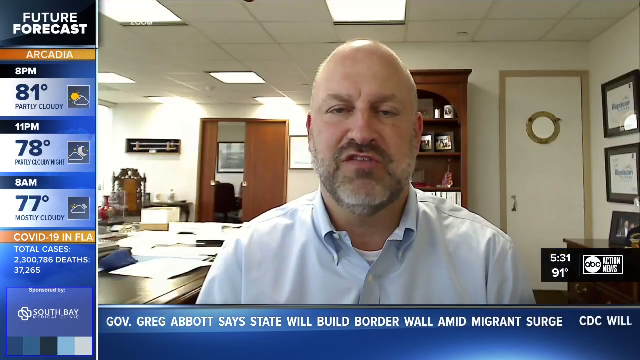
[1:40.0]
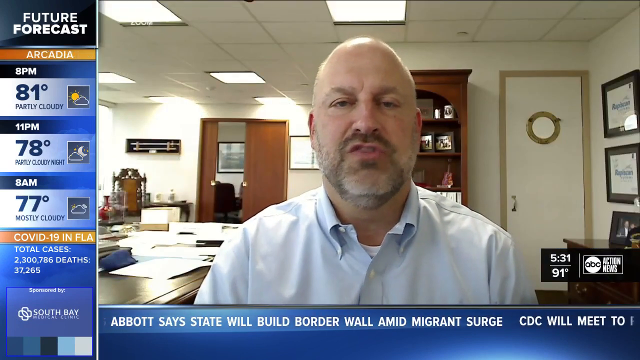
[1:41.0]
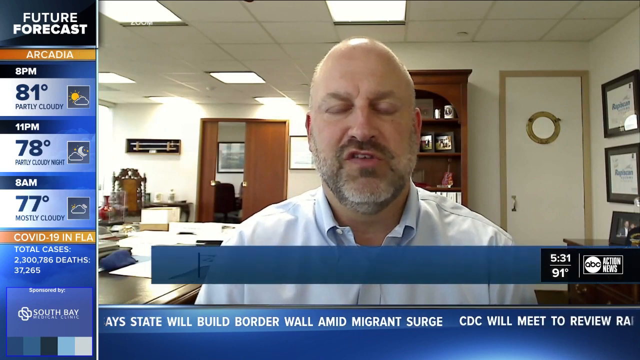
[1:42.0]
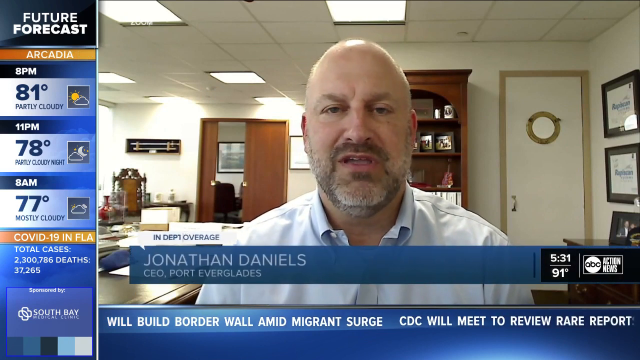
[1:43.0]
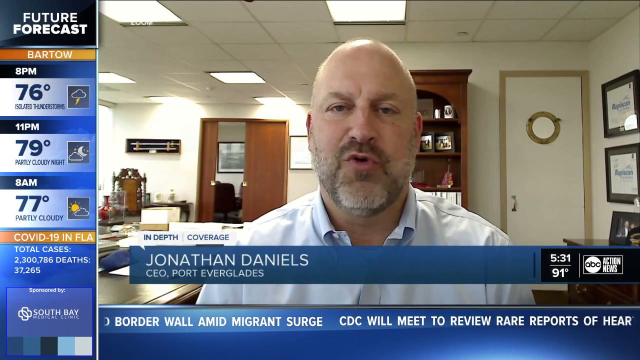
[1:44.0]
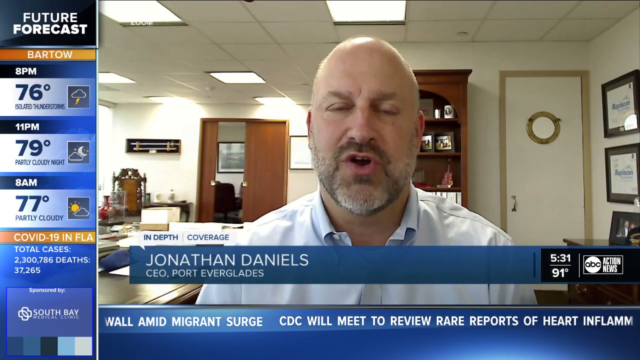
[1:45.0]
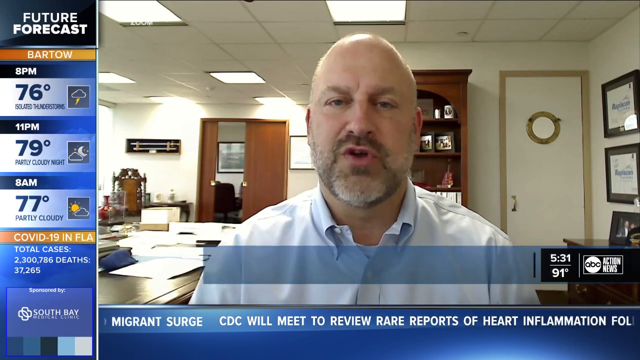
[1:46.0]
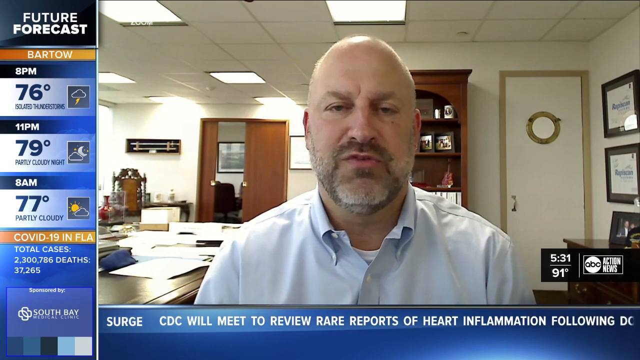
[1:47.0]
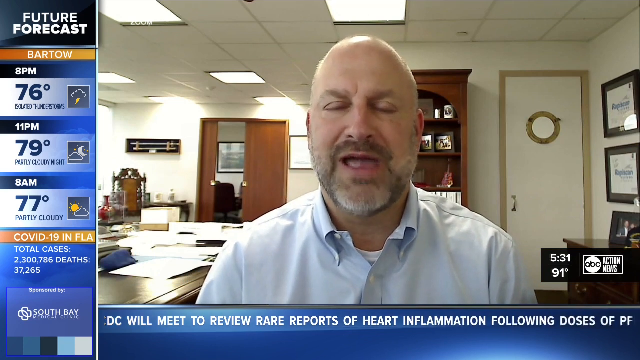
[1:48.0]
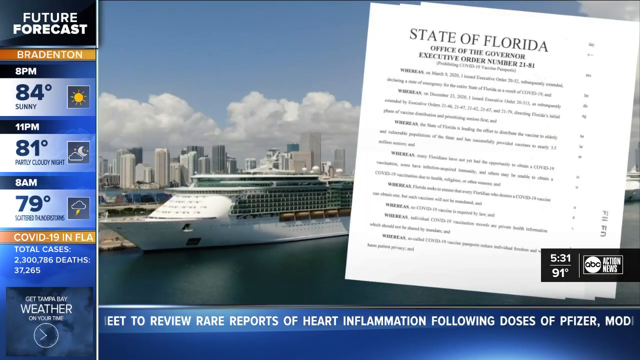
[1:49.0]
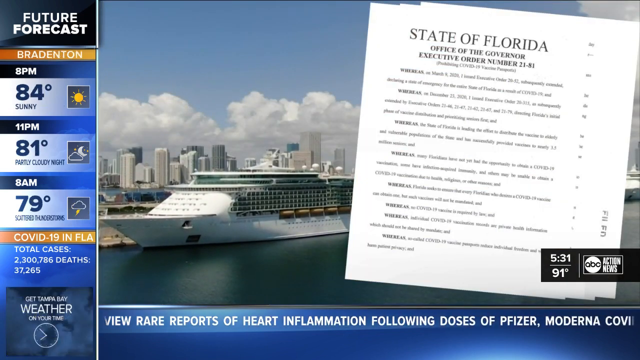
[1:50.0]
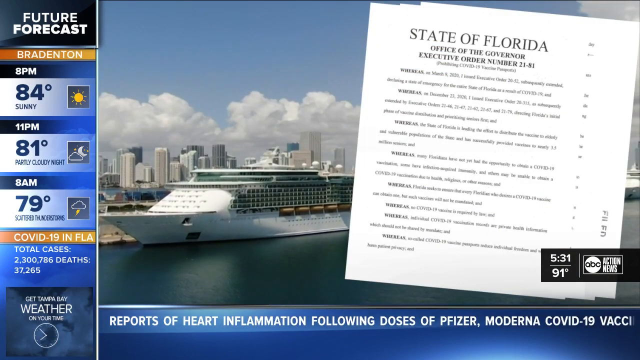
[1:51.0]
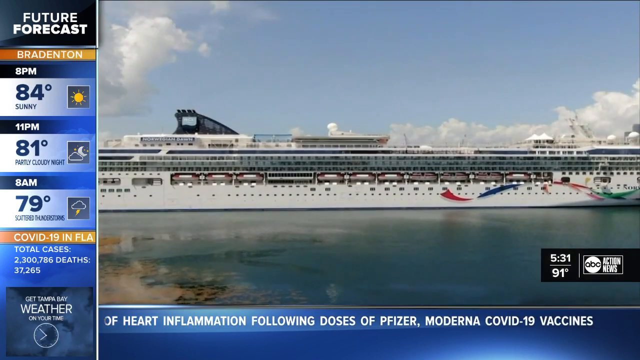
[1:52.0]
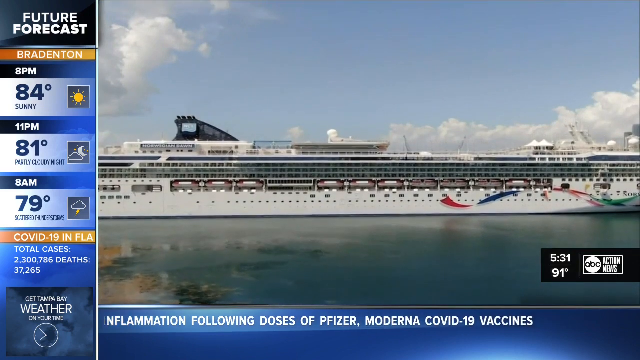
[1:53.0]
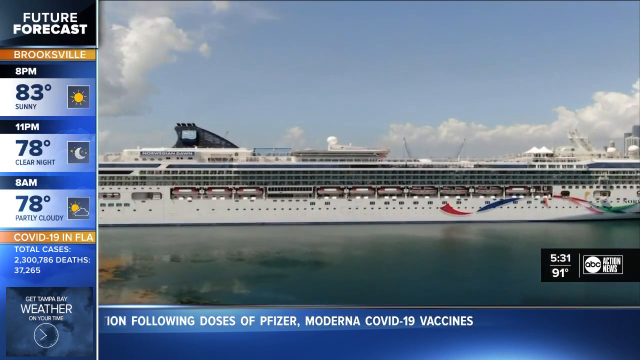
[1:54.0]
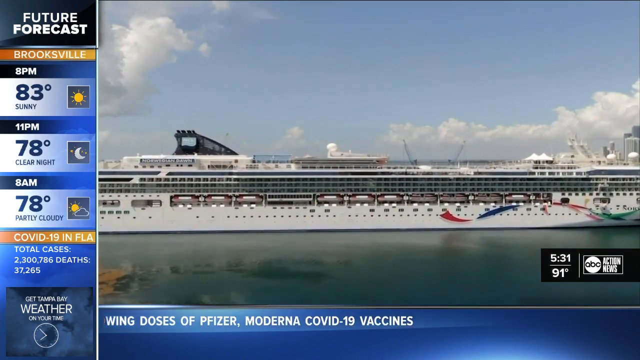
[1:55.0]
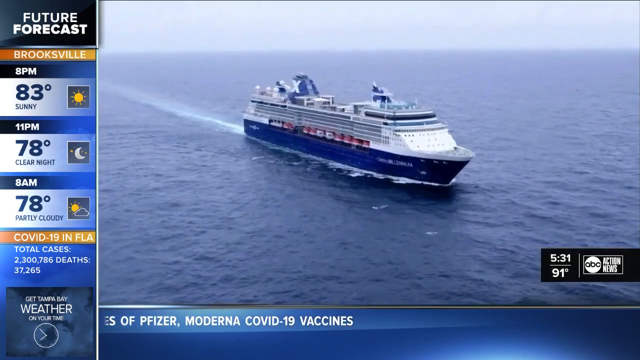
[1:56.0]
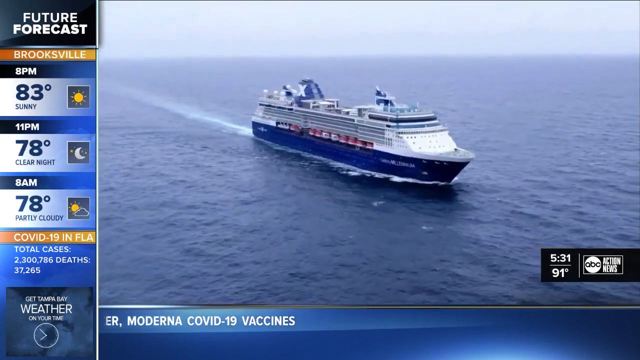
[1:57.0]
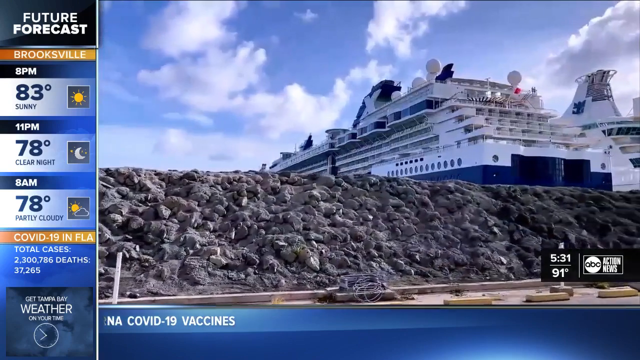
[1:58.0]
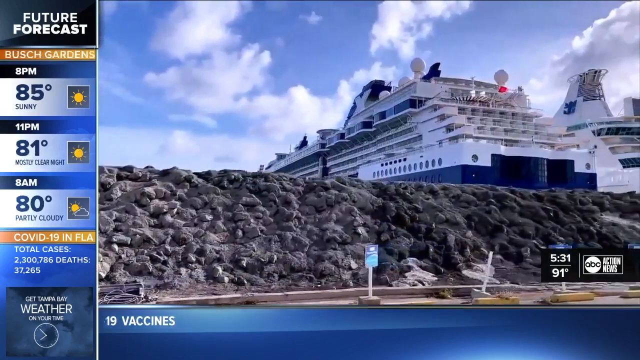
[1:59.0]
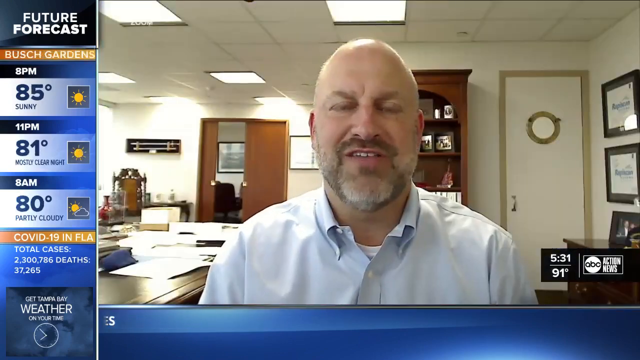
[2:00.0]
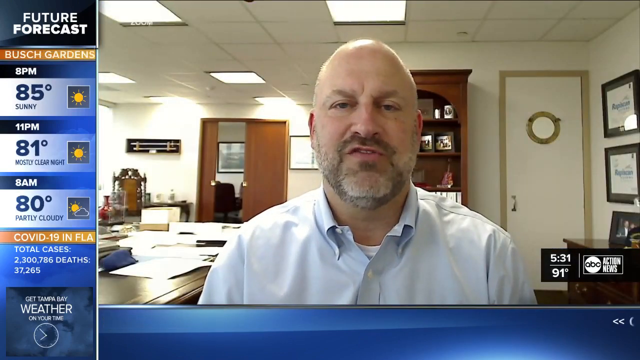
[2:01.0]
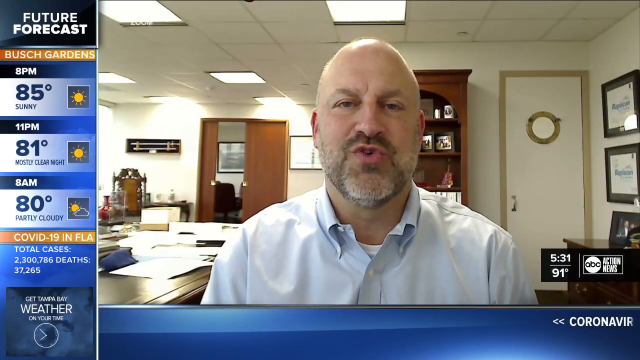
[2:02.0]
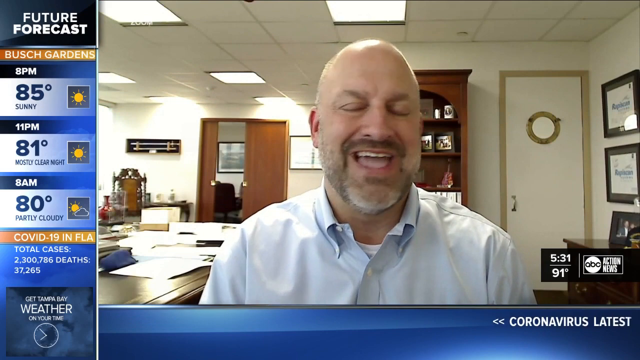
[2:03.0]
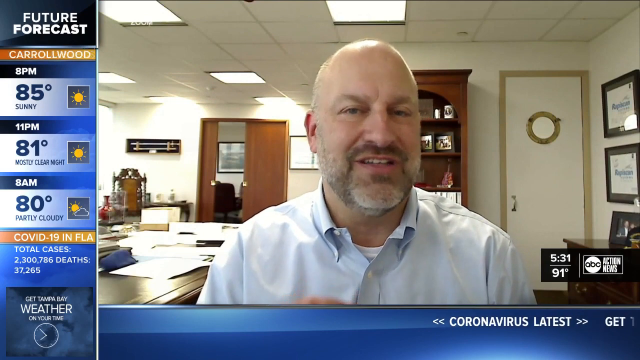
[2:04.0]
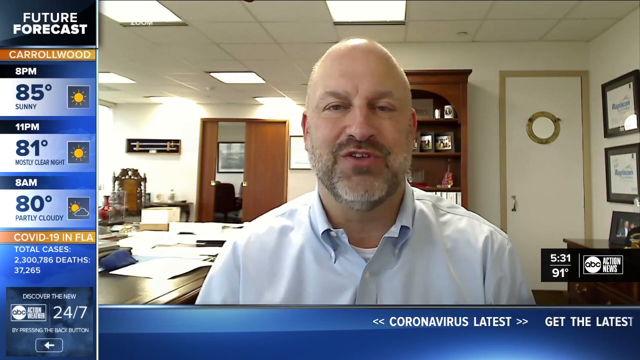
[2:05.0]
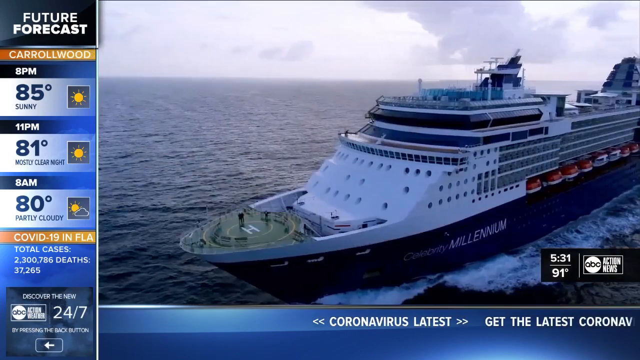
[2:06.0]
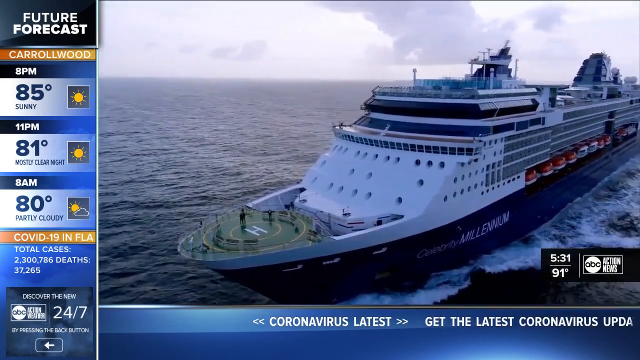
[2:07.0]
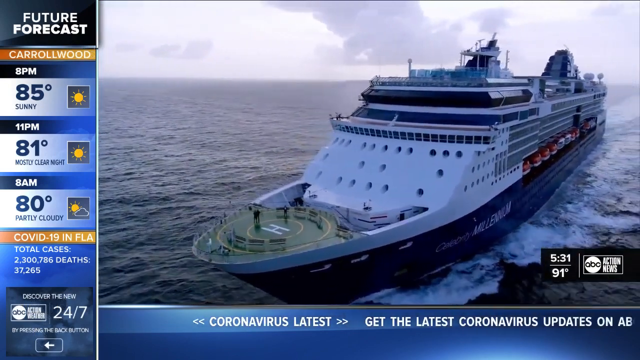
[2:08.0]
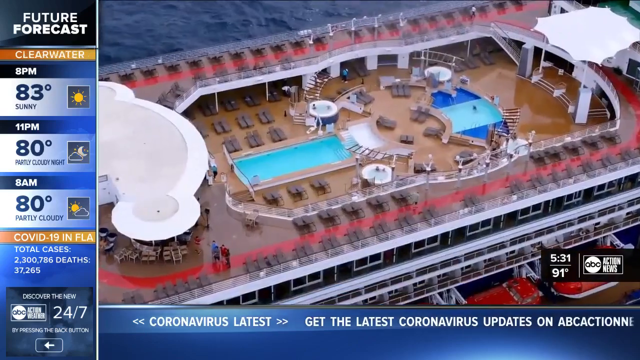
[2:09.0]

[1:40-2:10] Jonathan Daniels, the CEO of Port Everglades, speaks in in-depth coverage. The room is white all over, with some diplomas on the wall and a desk area with a visible chair behind him. He speaks quite slowly and wears a grey shirt and a white t-shirt. Next, "State of Florida Office of the Governor Executive Order Number 2181" appears on the right, with a ship on the left. A horizontal ship follows, then another ship in an aerial view, and another ship. The video returns to the person speaking to the viewers, then shows another ship from above, where the pool area is. The ABC Action News logo is in the bottom right.